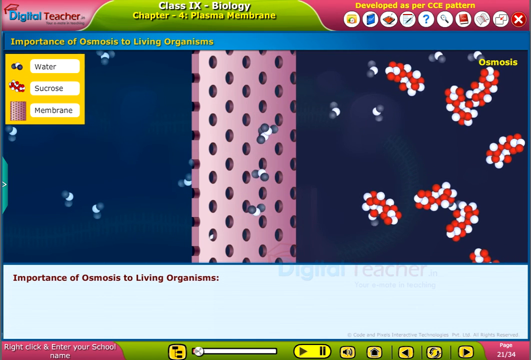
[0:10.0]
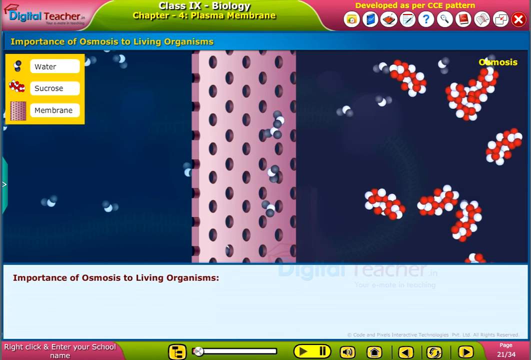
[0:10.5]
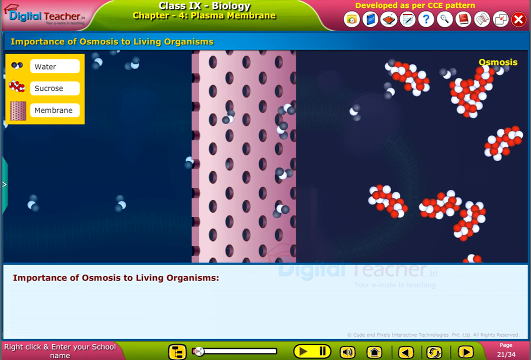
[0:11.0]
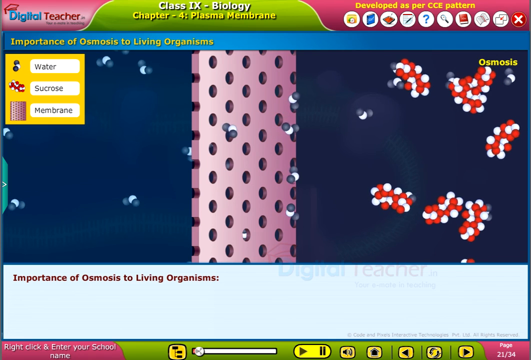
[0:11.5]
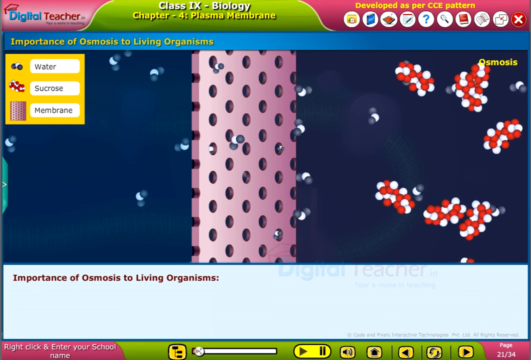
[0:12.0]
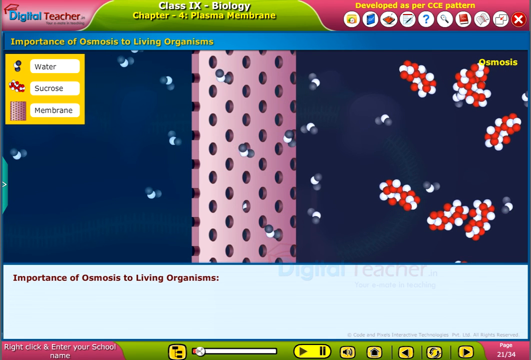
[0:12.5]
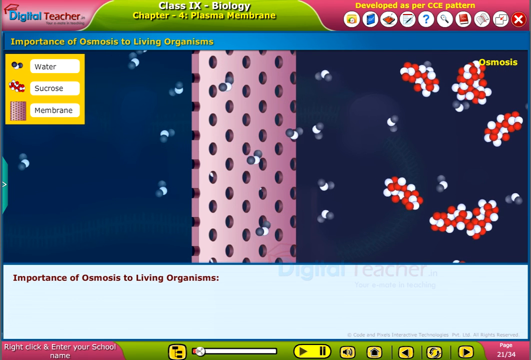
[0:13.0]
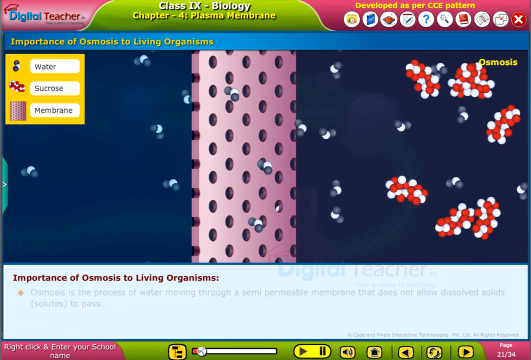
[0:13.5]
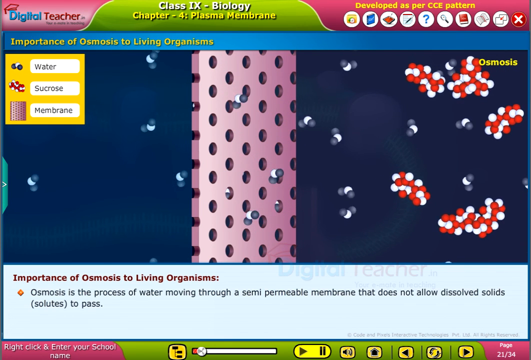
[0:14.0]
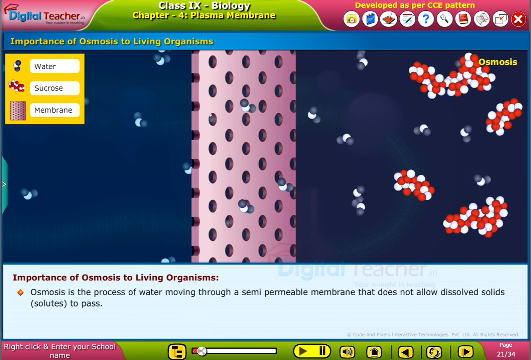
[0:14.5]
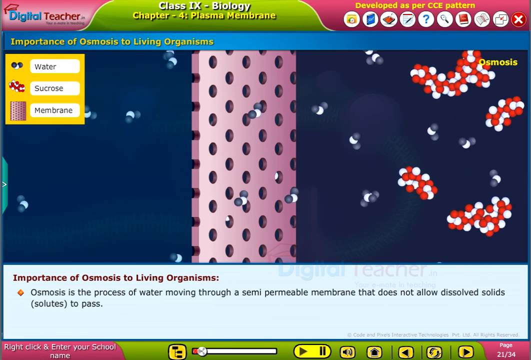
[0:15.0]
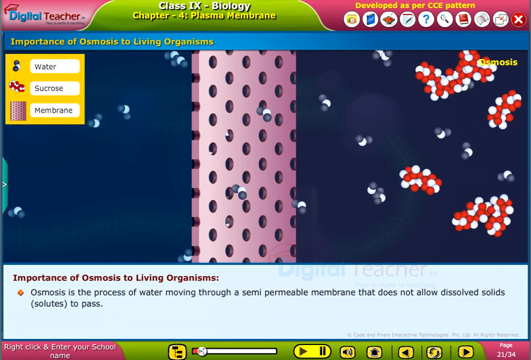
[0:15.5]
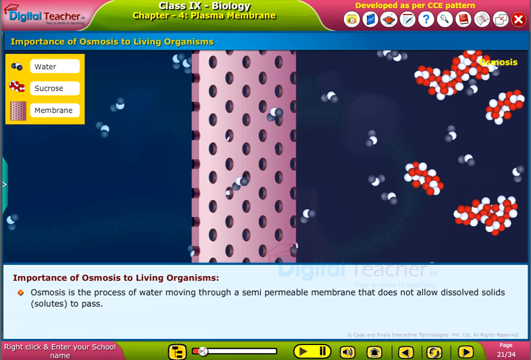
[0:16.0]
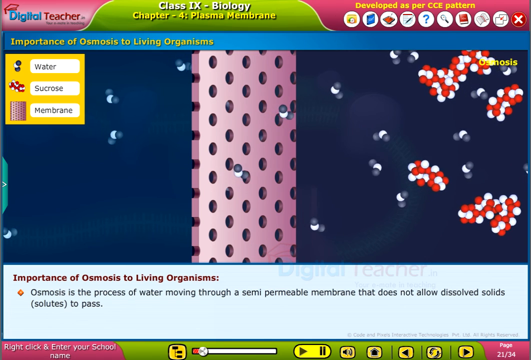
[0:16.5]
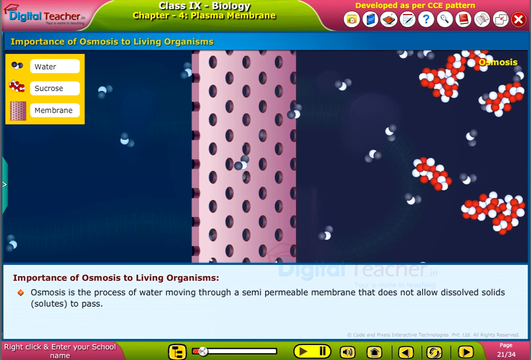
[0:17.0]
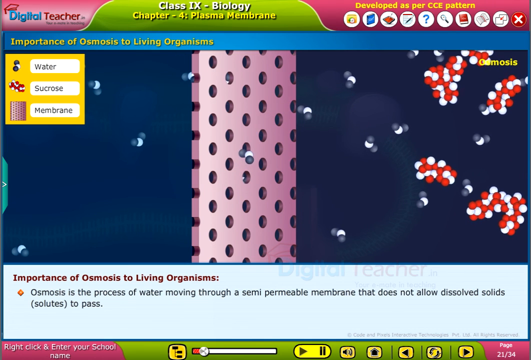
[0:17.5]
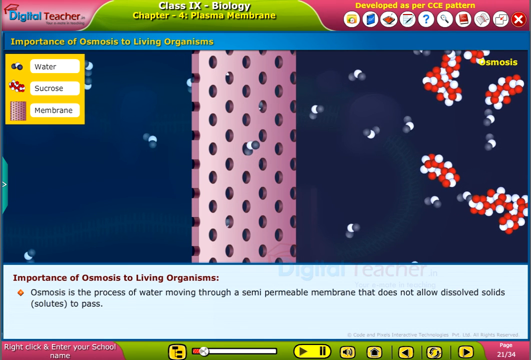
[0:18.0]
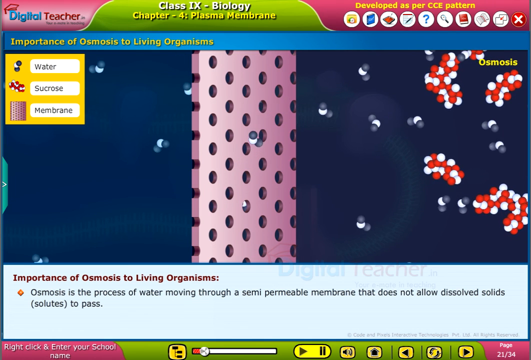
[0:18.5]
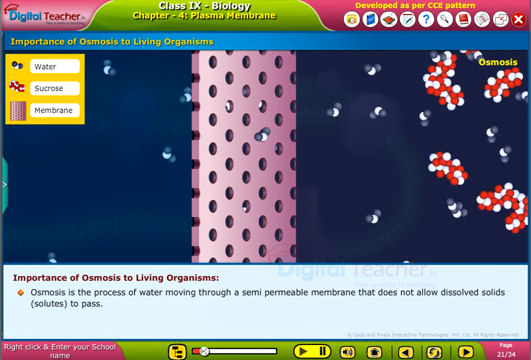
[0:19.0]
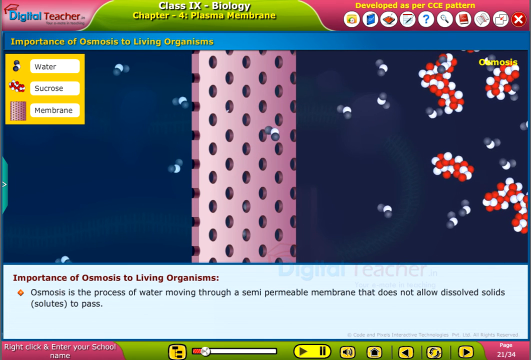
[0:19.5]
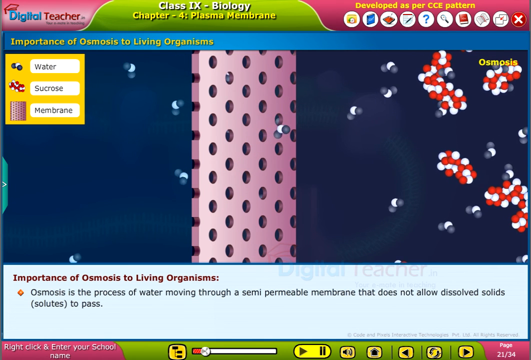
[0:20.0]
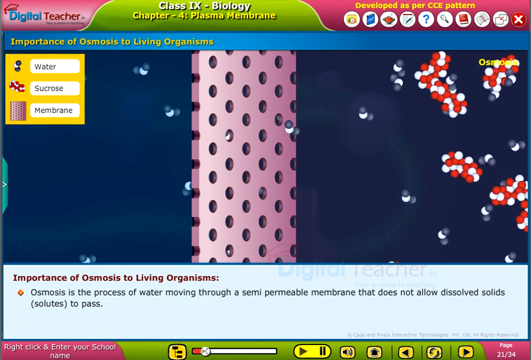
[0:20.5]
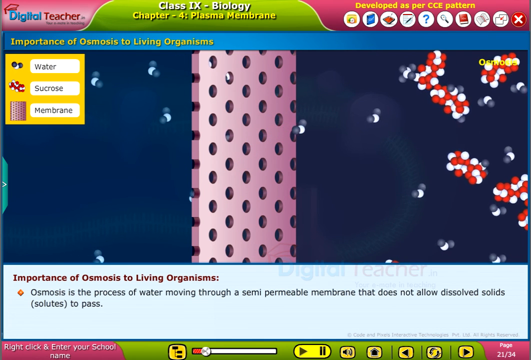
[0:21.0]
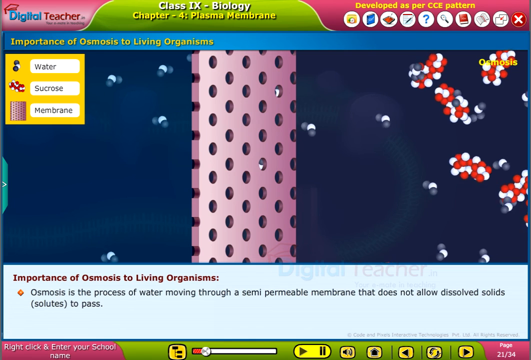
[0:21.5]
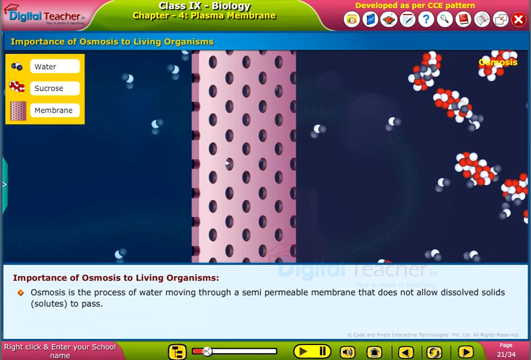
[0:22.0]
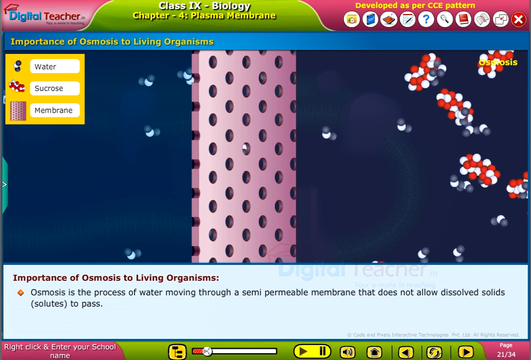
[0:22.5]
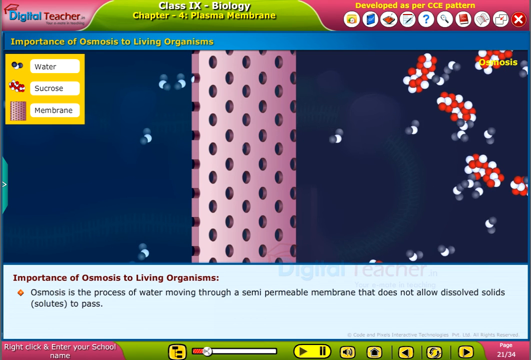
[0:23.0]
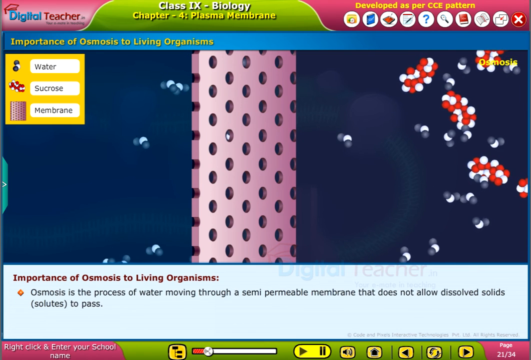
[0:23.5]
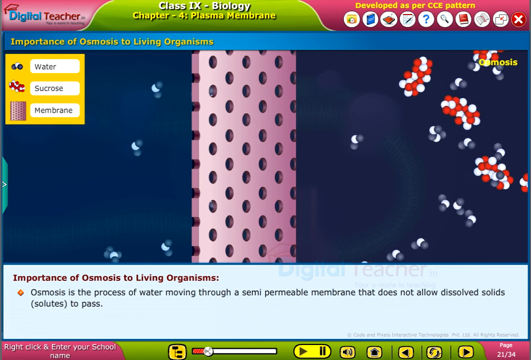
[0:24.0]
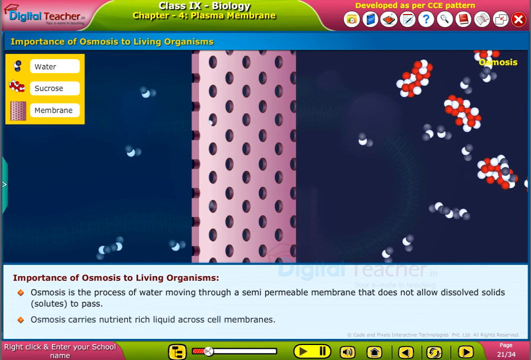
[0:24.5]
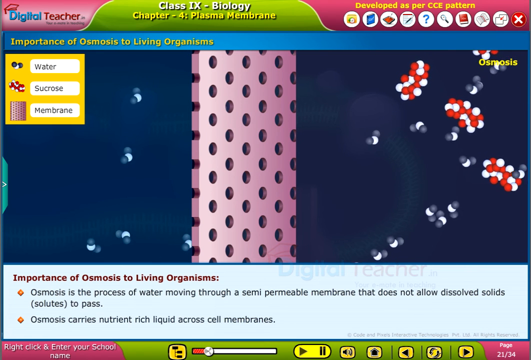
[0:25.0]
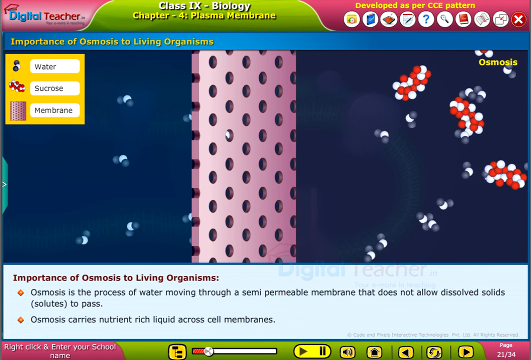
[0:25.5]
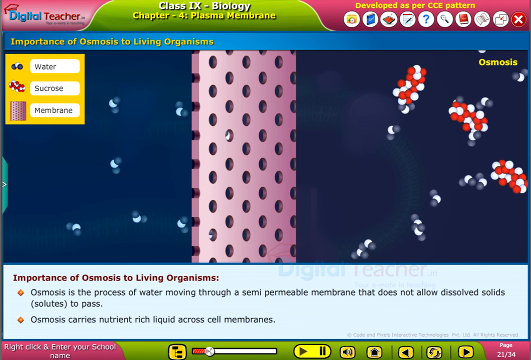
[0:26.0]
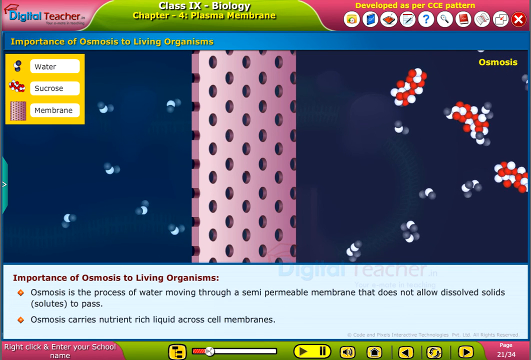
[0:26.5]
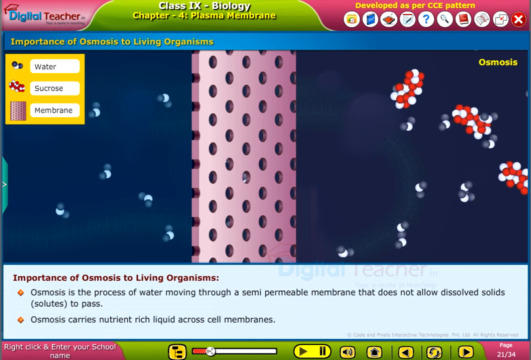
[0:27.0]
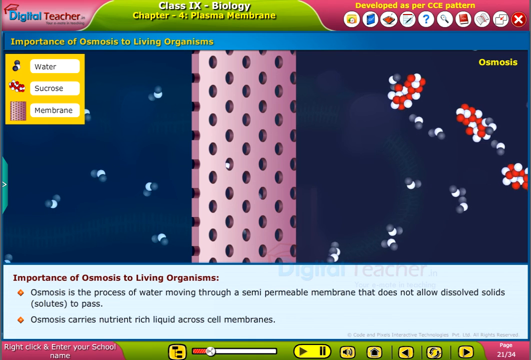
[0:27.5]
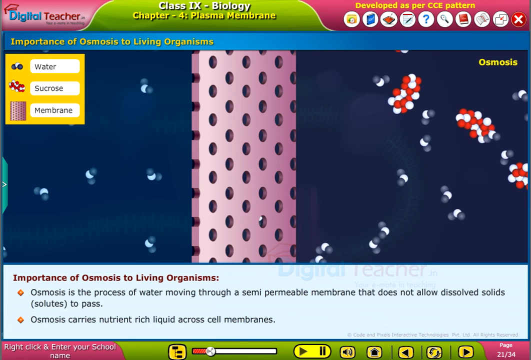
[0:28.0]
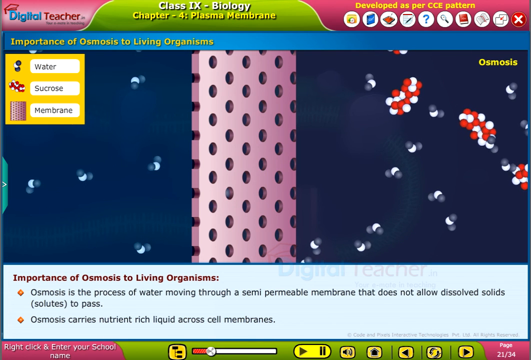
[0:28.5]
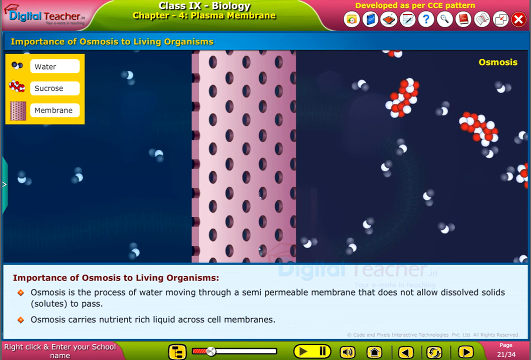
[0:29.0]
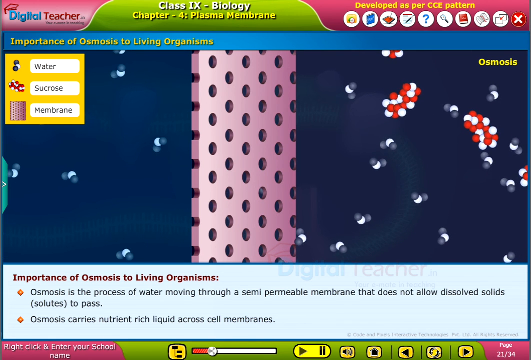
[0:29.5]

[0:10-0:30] The Digital Teacher screen has a pink background with several icons at the top and an X sign in the right-hand corner. It is titled Chapter 4, Plasma Membrane, Importance of Osmosis to Living Organisms. Water, sucrose, and the membrane are labeled in a golden yellow box. On the left-hand side of the screen, a variety of molecules pass through a pink, rectangular, sponge-like material on a blue background, which appears to show osmosis moving in and out of the circles on the sponge. Information on the importance of osmosis to living organisms states that osmosis is the process of moving water through a semi-permeable membrane that does not allow dissolved solids to pass, and that osmosis carries nutrient-rich liquid across cell membranes. The molecules go in red and white and become dark blue and light blue once they pass through the membrane.